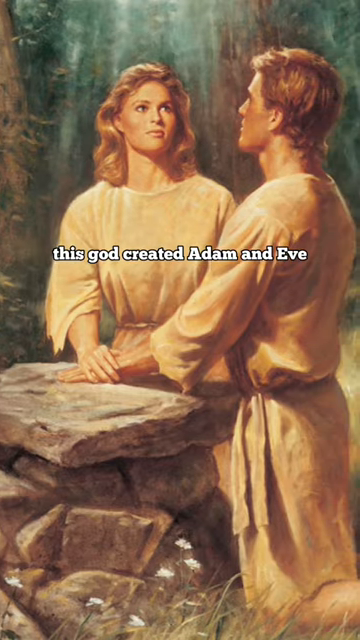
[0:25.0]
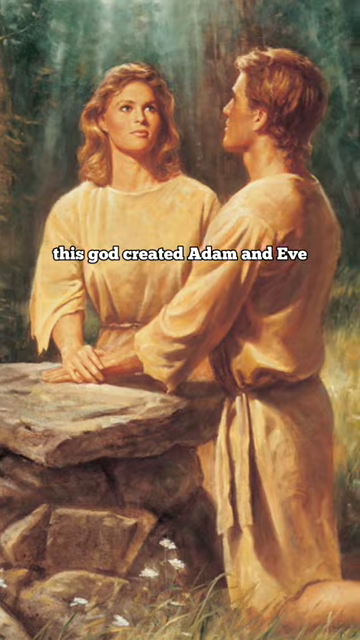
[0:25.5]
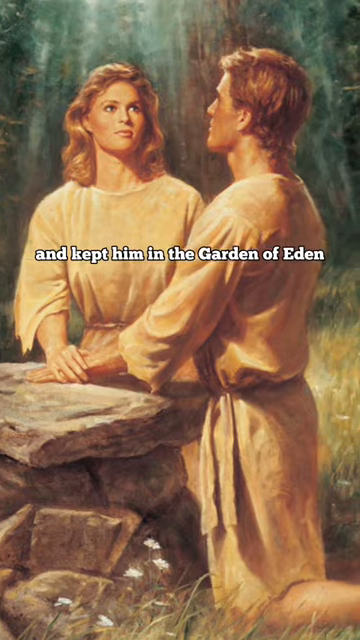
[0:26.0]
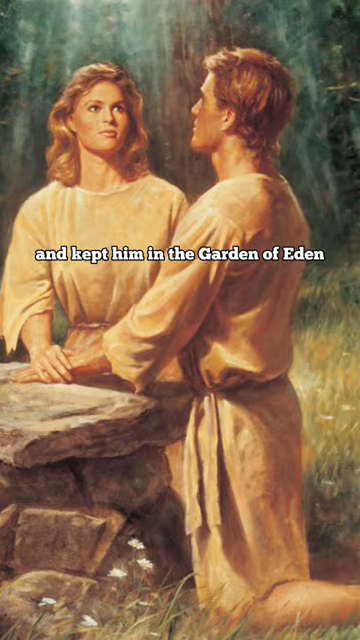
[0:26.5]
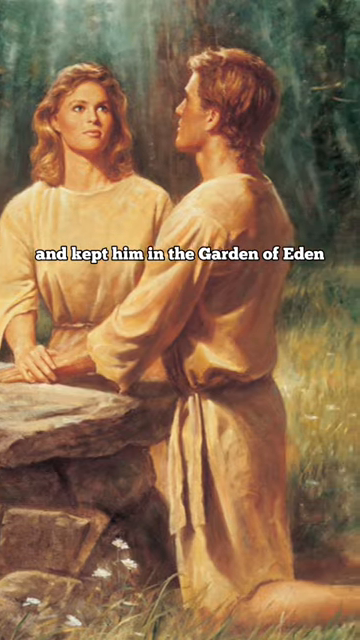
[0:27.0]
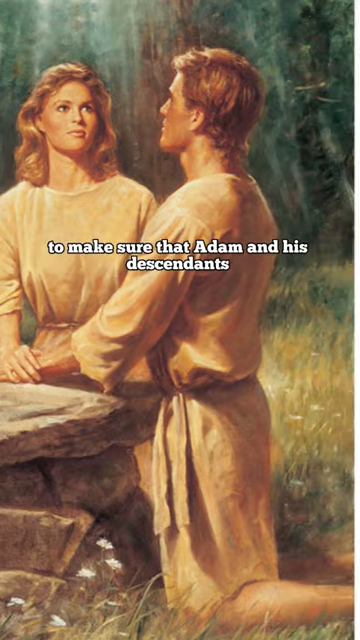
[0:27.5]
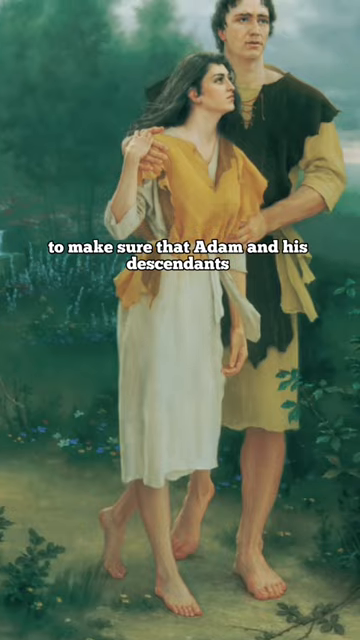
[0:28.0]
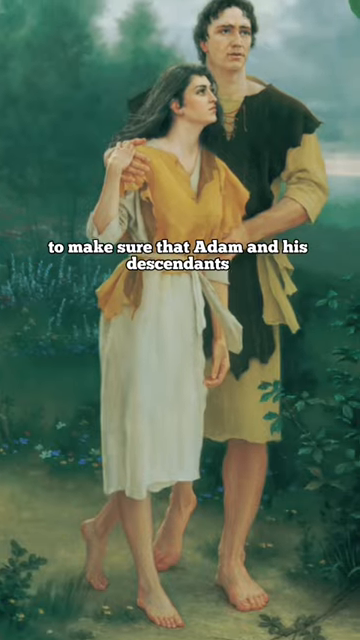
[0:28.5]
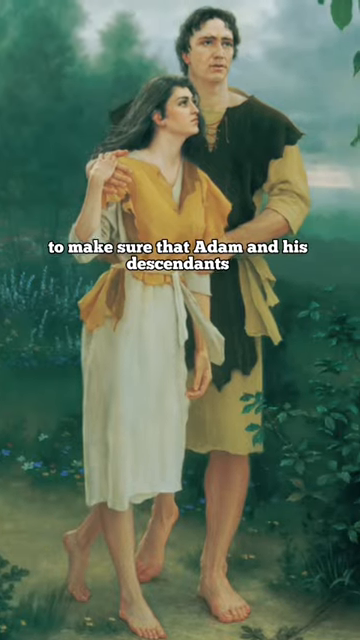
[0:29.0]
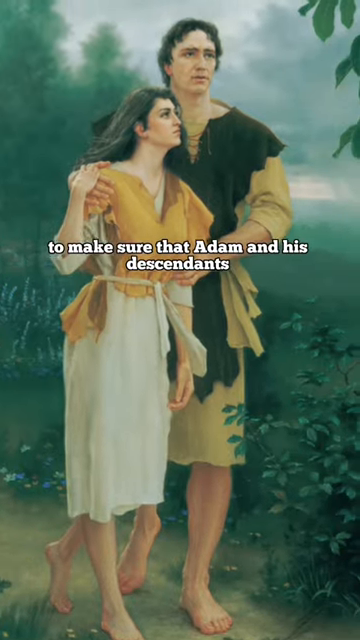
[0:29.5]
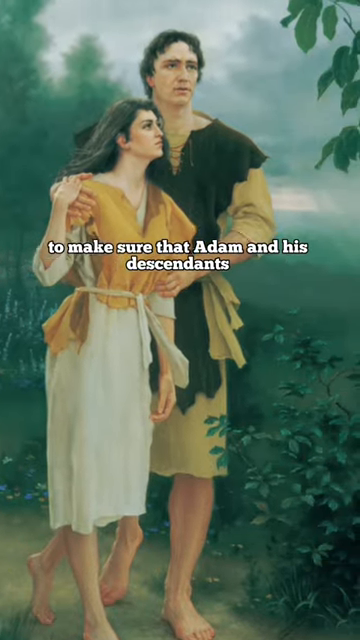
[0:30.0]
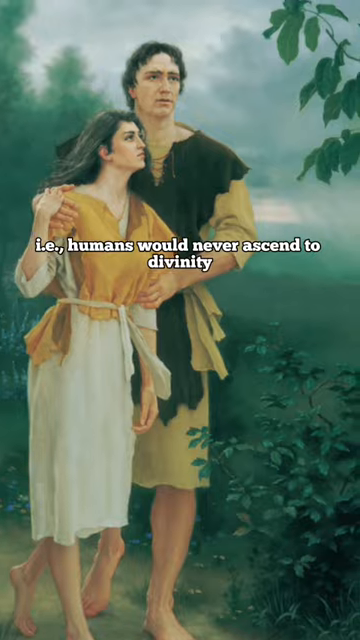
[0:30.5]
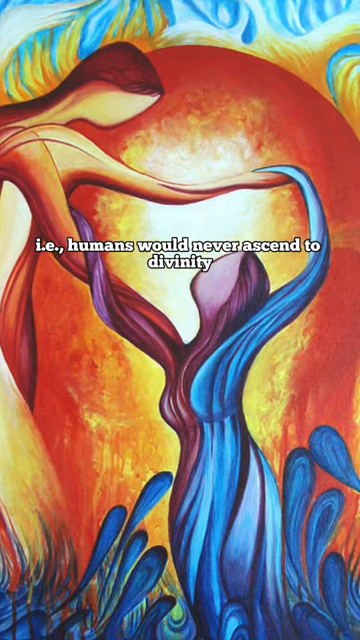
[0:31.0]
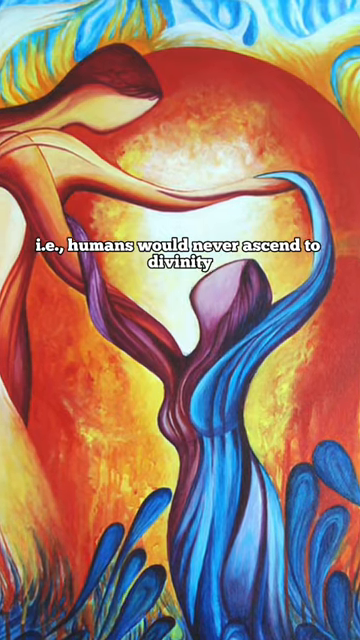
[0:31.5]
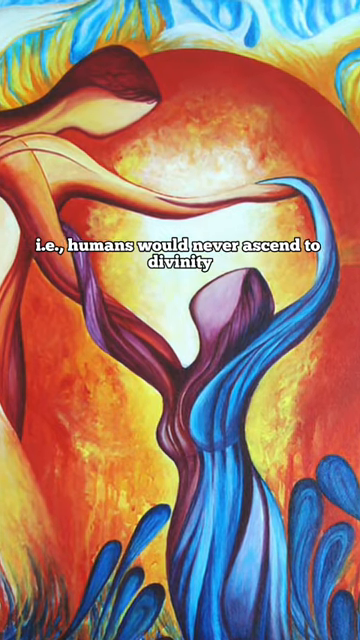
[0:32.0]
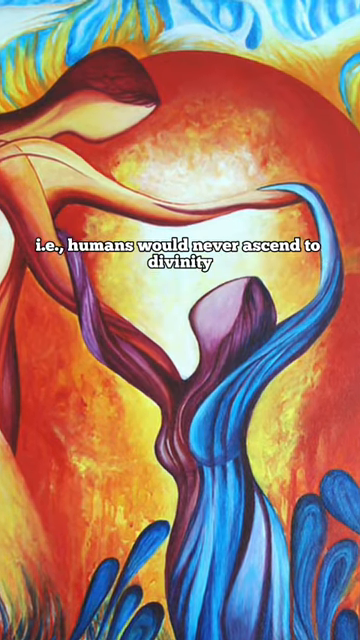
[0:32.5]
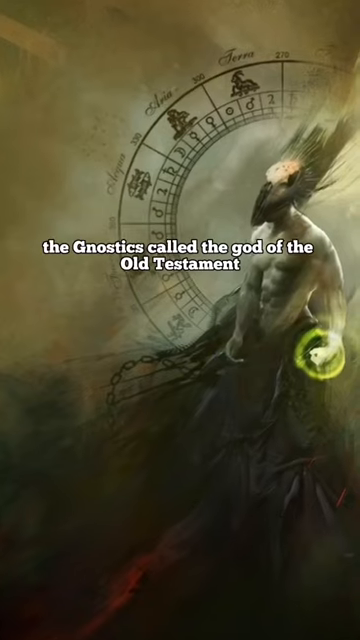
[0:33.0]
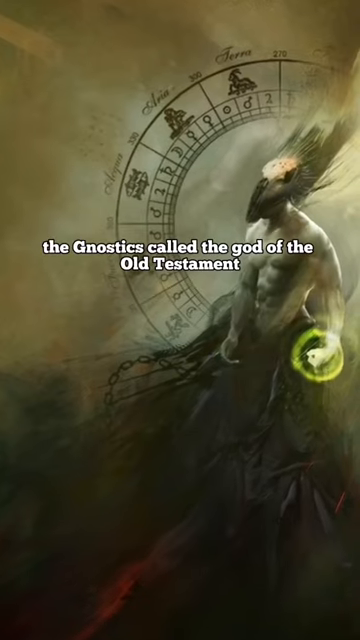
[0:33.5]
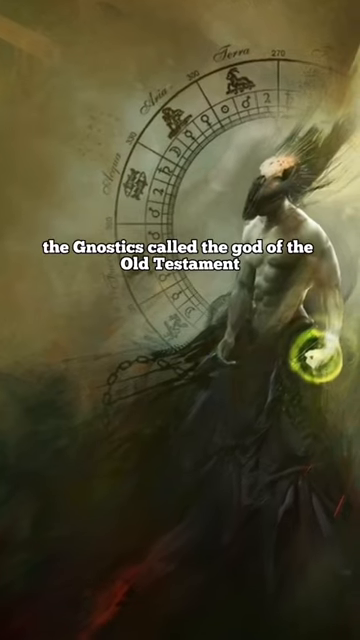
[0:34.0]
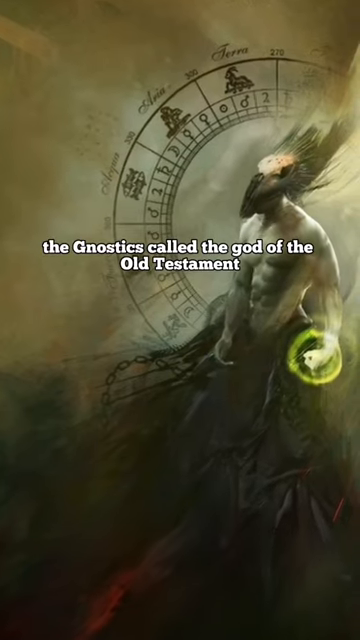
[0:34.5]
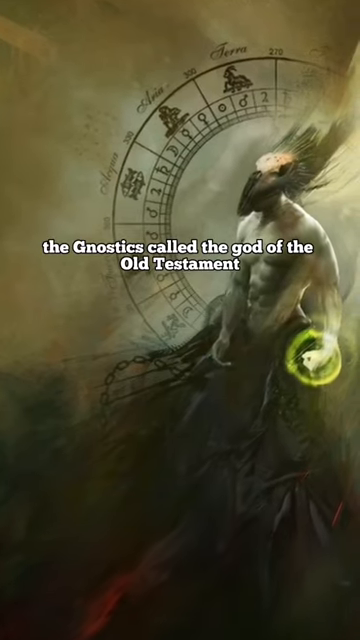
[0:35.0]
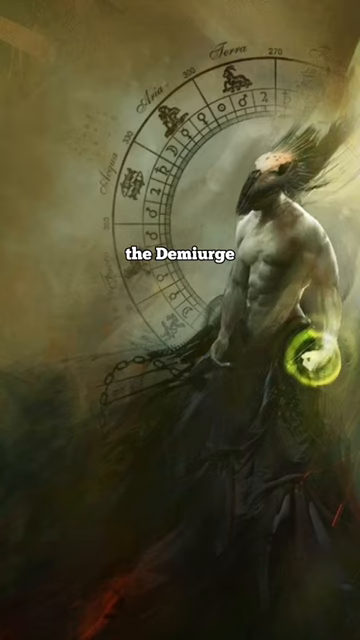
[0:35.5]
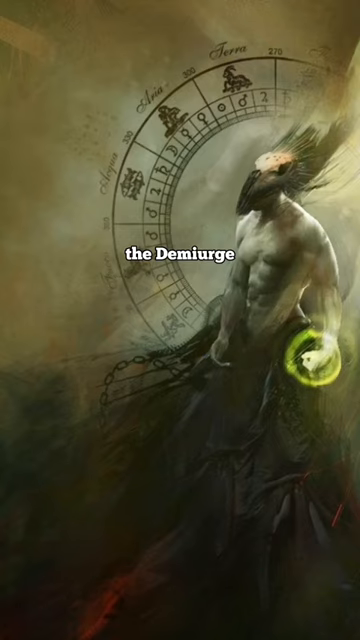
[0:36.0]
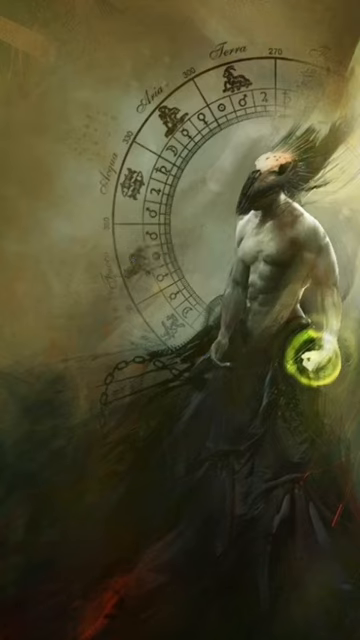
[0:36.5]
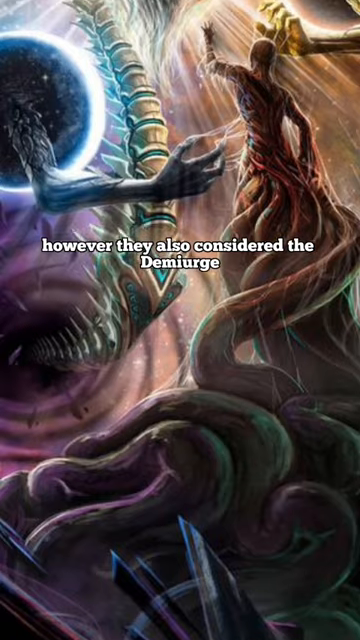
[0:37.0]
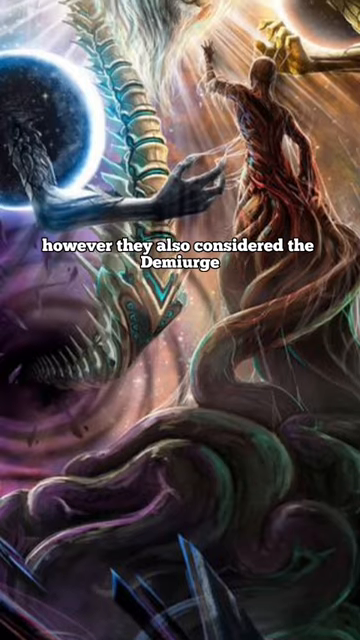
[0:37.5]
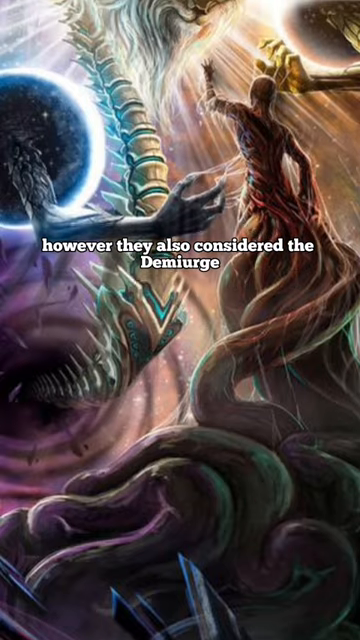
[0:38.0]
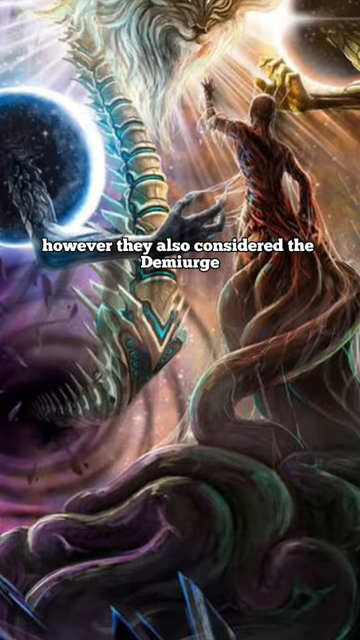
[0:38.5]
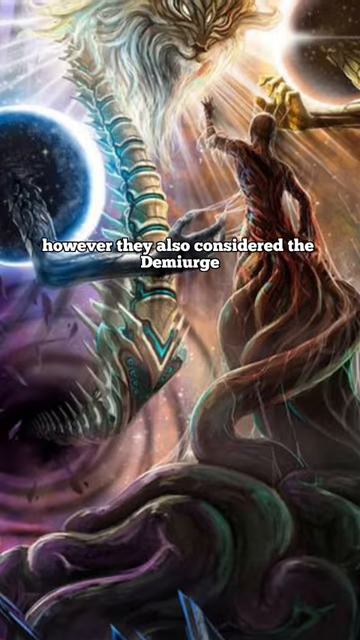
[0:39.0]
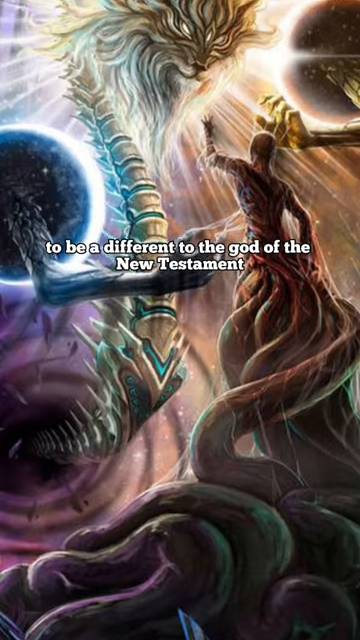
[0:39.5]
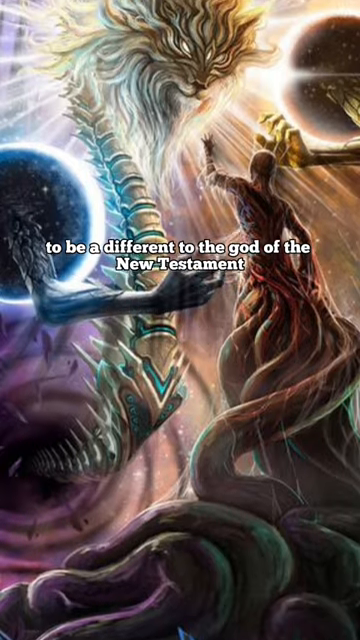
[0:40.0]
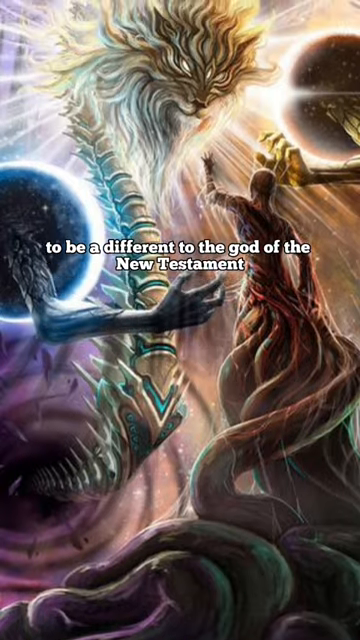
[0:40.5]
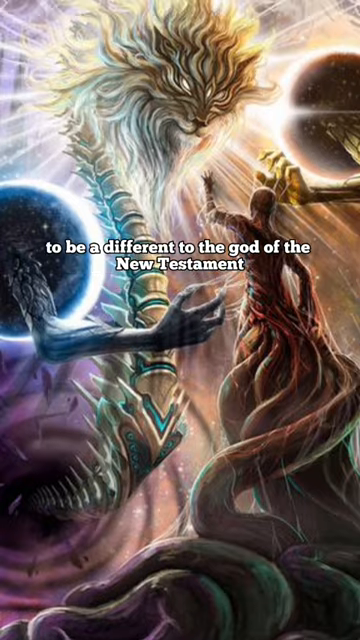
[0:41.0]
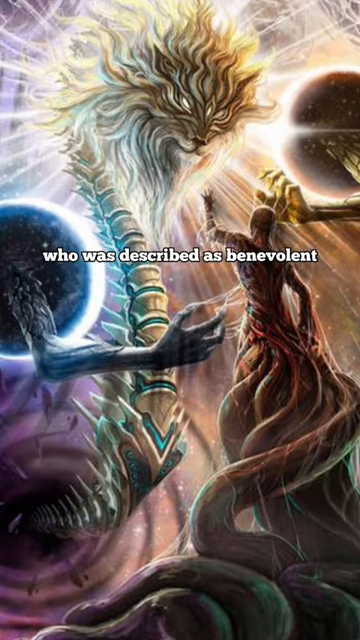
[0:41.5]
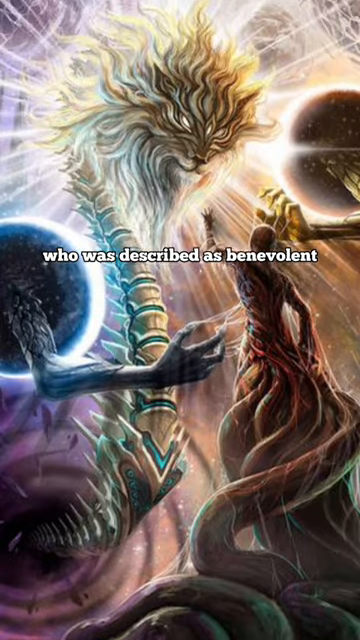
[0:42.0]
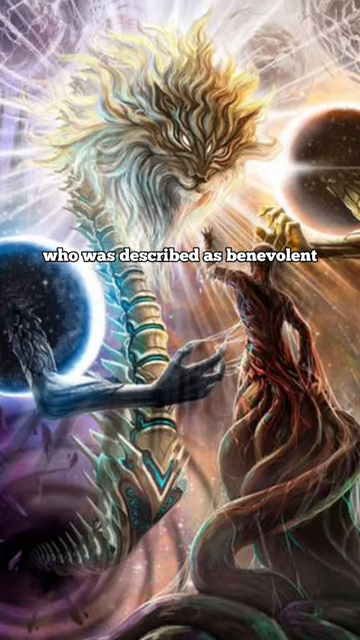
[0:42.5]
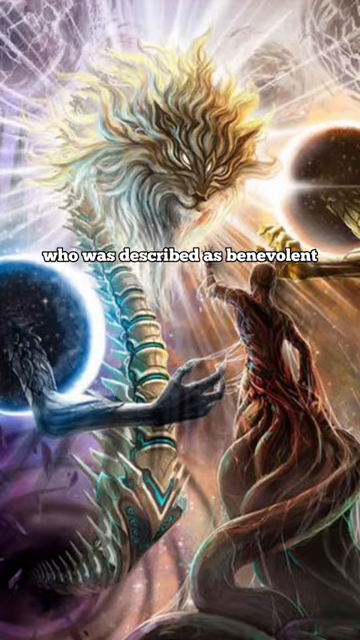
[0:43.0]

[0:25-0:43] The image of Adam and Eve continues as text states that God created Adam and Eve and kept them in the garden to make sure that Adam and his descendants, humans, would never ascend to divinity; that the Gnostics called the God of the Old Testament the Demiurge; and that they also considered the Demiurge to be different from the God of the Old Testament, who was described as benevolent. Pictures follow of Adam and Eve in the garden, and of divine spirits with their hands raised and clasped, dancing together. The Demiurge appears as an unusual-looking, devilish being in front of a clock or a calendar of some type, reaching up toward a scary, monster-like being that faces him from above. This being is backlit by light in space and has long arms and fingers, with spiderwebs emerging from the ends of the fingers.